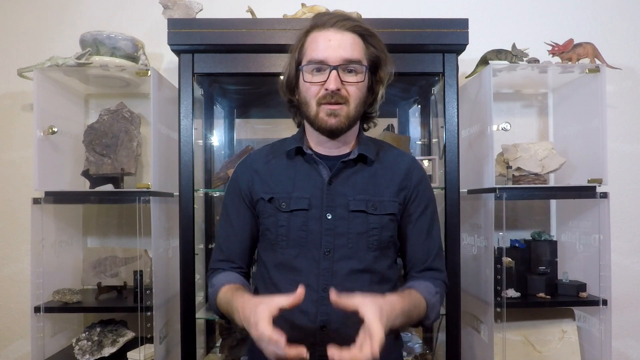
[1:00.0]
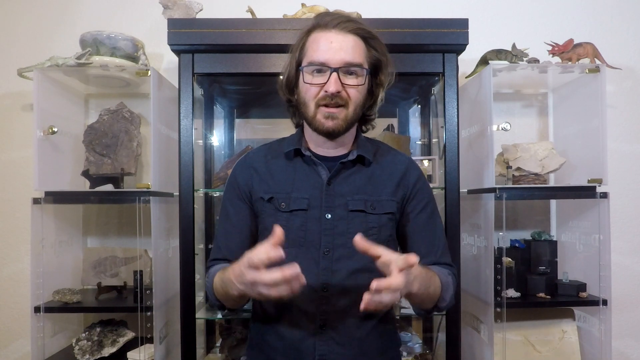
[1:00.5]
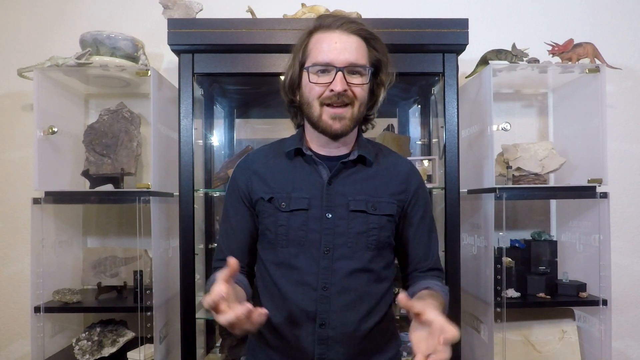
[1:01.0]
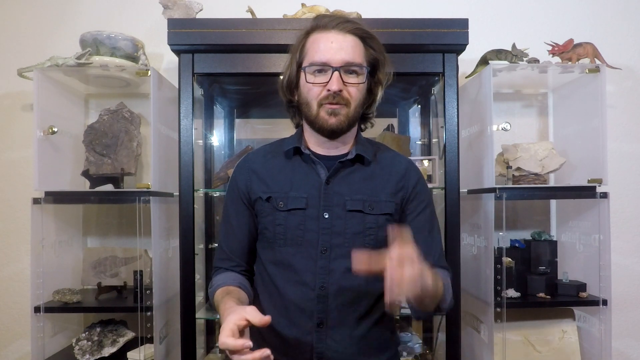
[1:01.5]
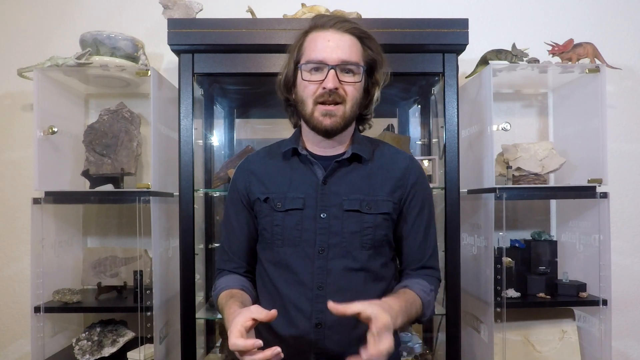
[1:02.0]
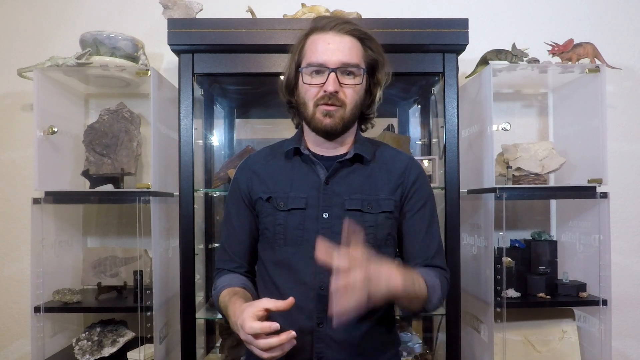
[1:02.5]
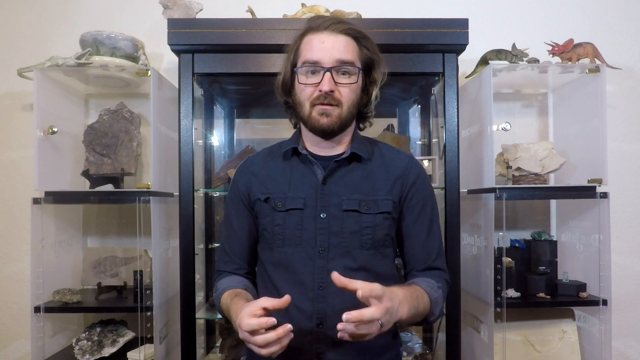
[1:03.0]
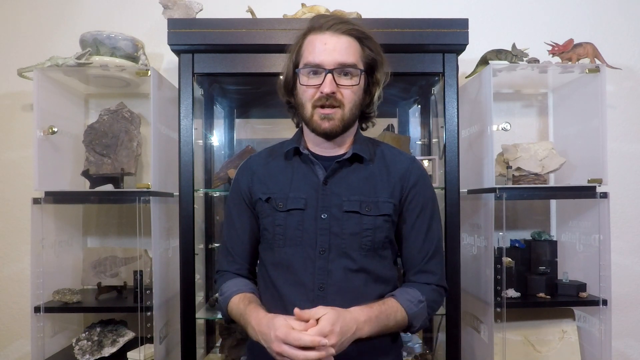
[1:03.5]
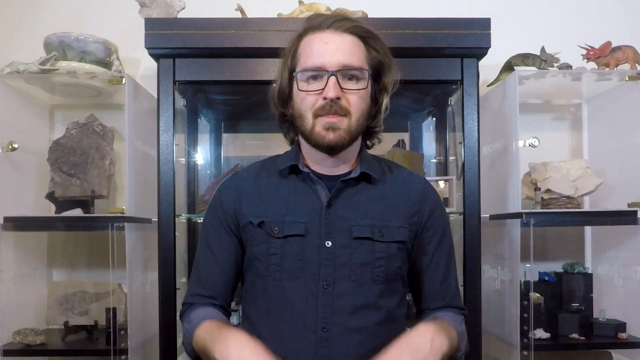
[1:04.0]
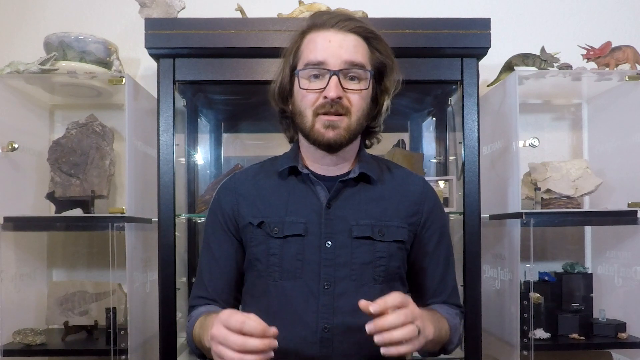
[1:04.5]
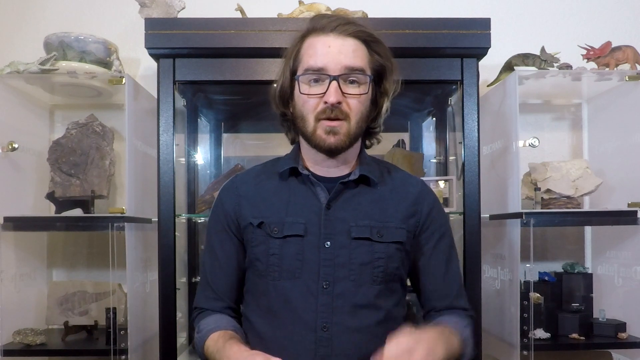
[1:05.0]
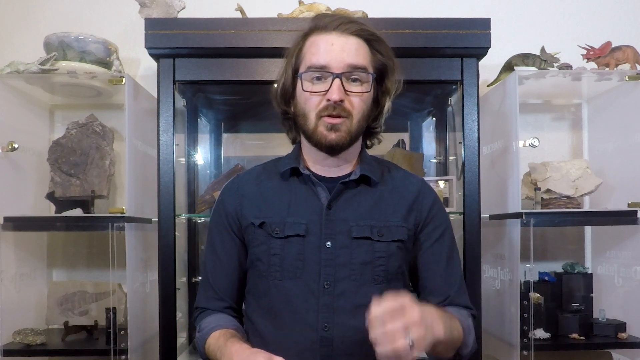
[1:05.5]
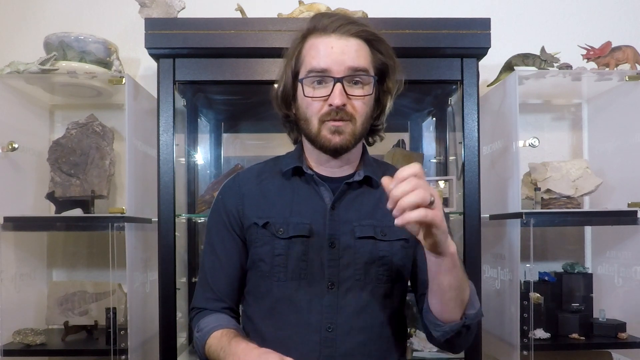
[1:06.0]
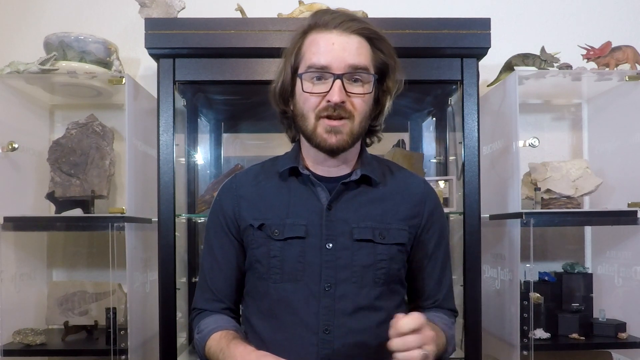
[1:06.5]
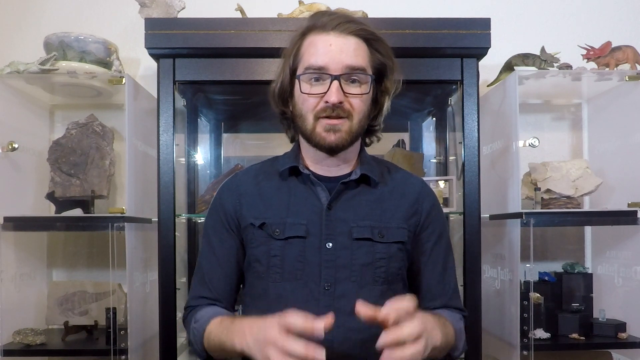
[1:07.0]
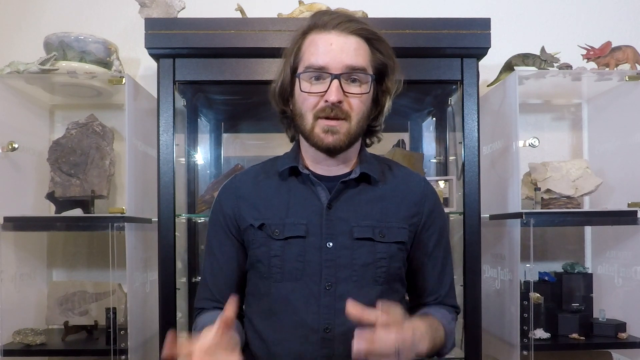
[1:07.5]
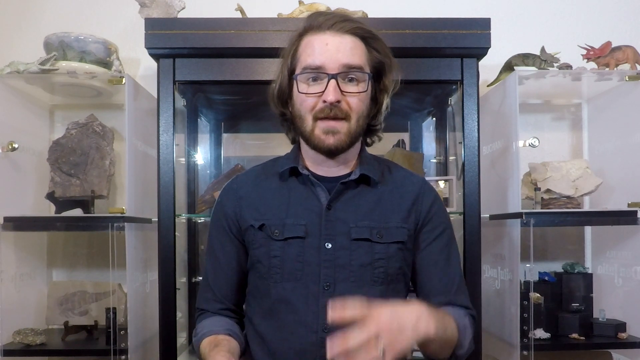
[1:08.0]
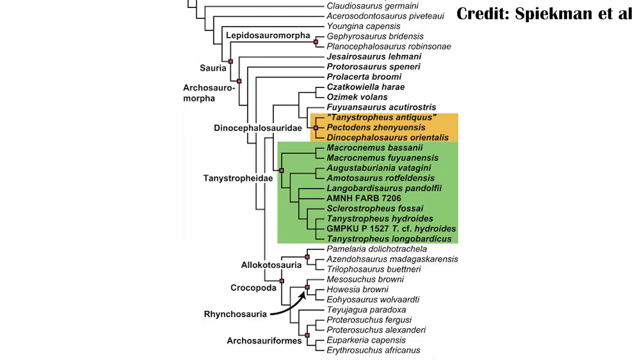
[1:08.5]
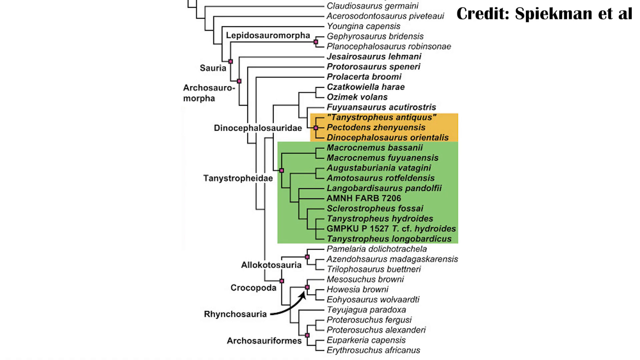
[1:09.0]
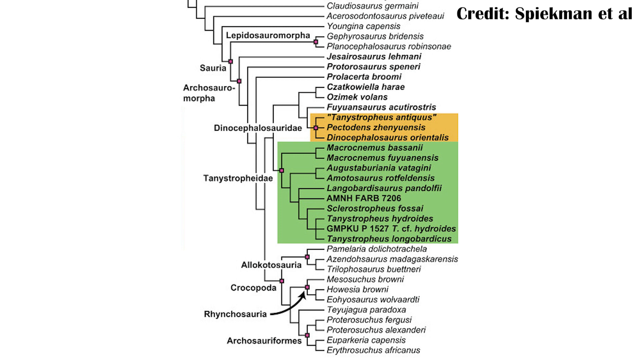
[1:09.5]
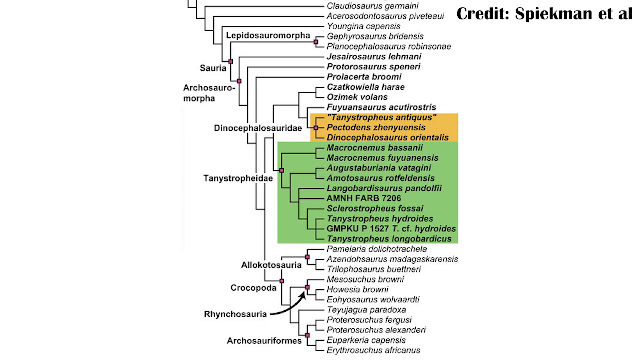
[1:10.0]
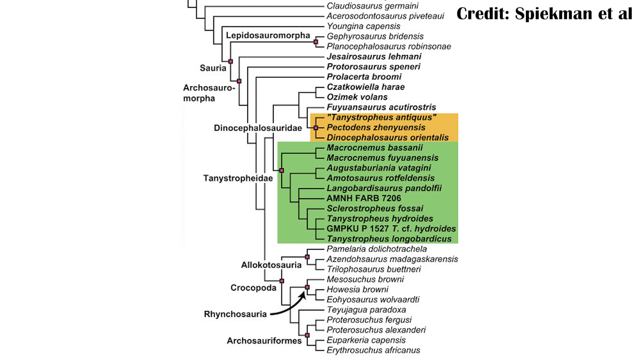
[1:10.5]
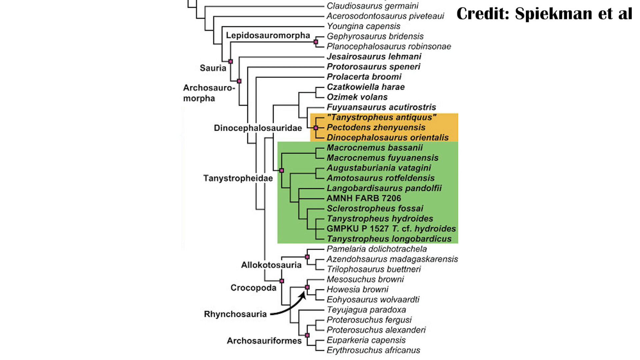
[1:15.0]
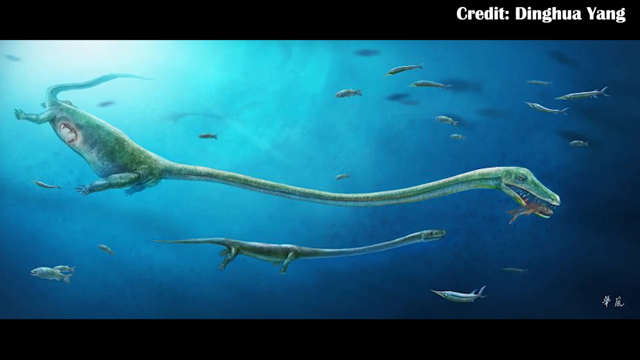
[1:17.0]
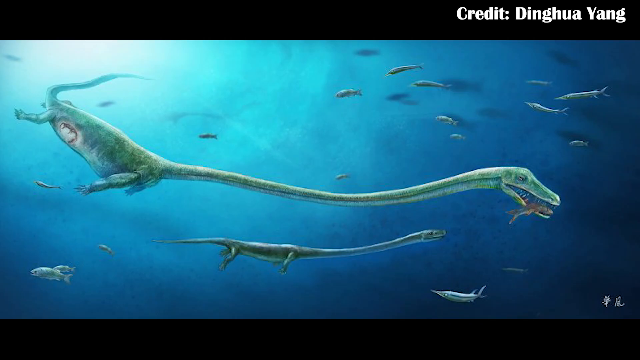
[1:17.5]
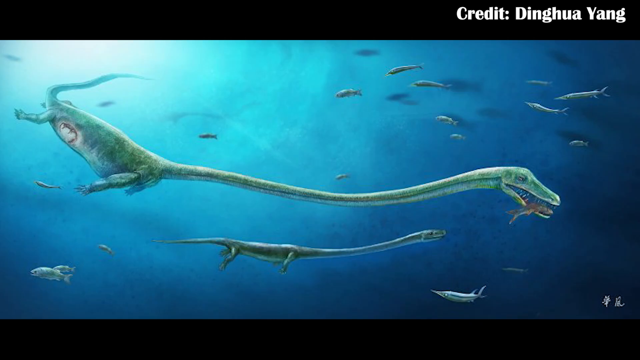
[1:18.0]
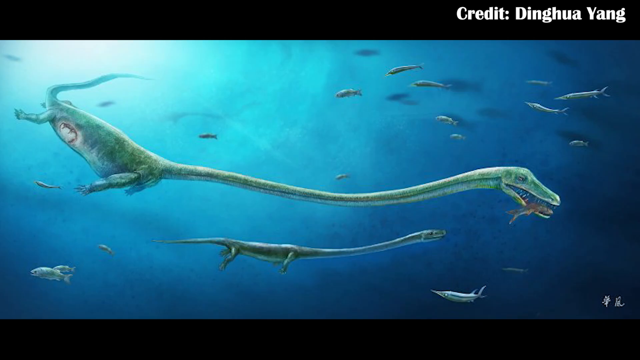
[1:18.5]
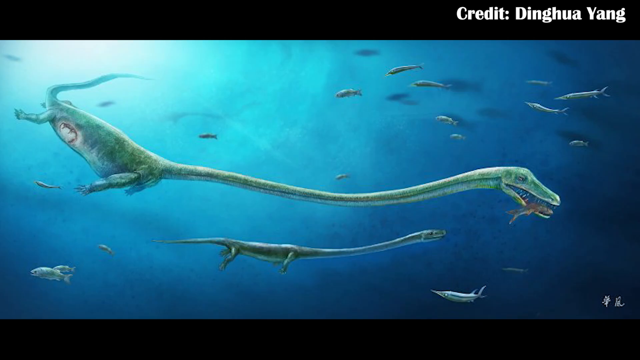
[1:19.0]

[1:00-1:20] The host moves his left hand up and down for emphasis, using mostly his left hand, and the camera zooms in. The video returns to the same phylogenetic chart, now with two highlighted sections. The first section, from the "Dinocephalo sardae" branch, has three names highlighted in a mustard yellow: "Tannistropheus antiquaeus", "Pectidens xeniosis" and "Dinocephalosaurus orientalis". The second section, boxed in green, has about 11 long Latin names from the same category, which splits in two and then into smaller branches; the first name is "Macronemus basani" and the last is "Tannistropheus longobardicus". After the chart comes another artist's depiction of marine dinosaurs swimming underwater, about two of them, each with a very long neck, surrounded by ancient fish. The largest has caught a fish in its mouth and has sharp teeth; its neck seems longer than its body, and it has a very long tail and four limbs. The second dinosaur, of the same species, swims behind it. The credit is to Dinghua Yang.